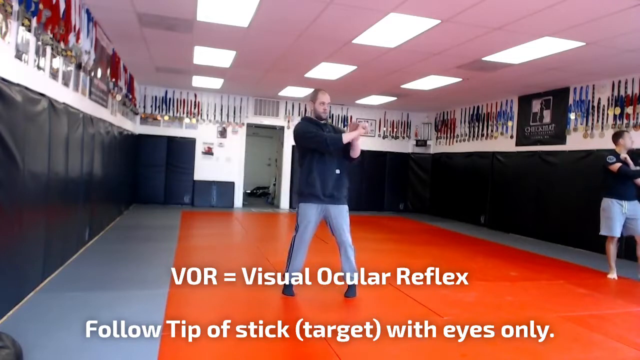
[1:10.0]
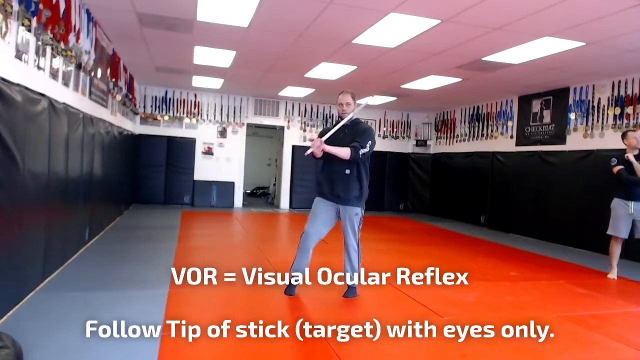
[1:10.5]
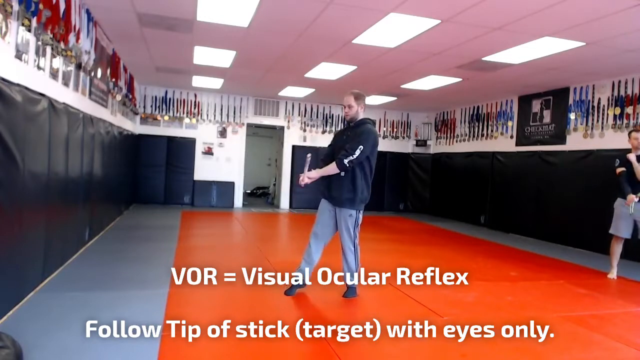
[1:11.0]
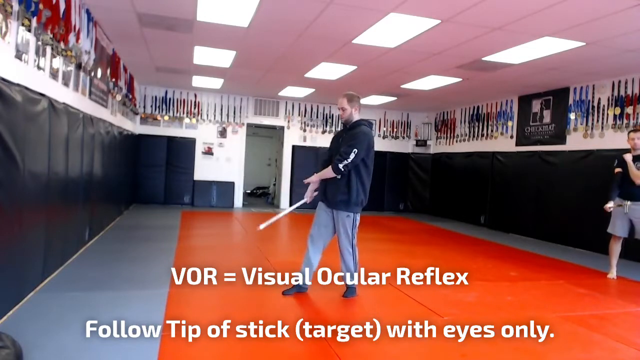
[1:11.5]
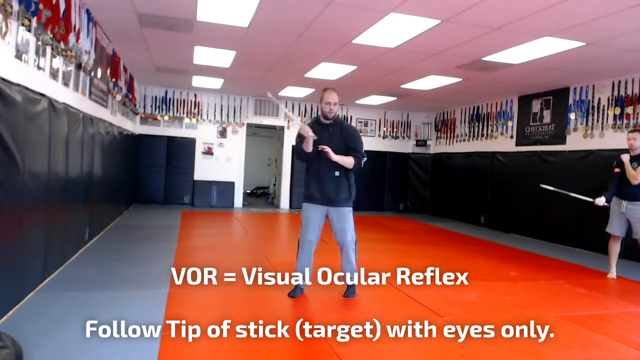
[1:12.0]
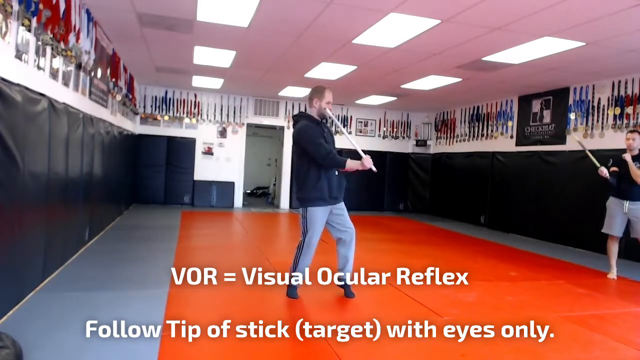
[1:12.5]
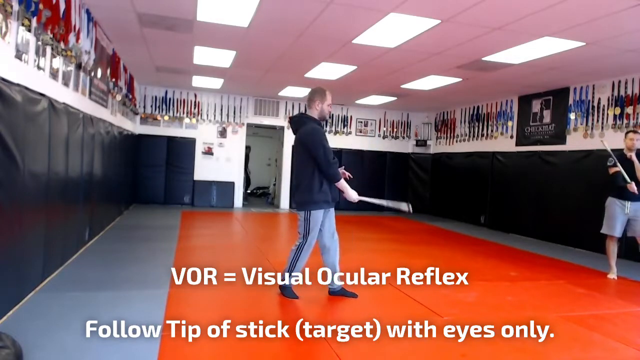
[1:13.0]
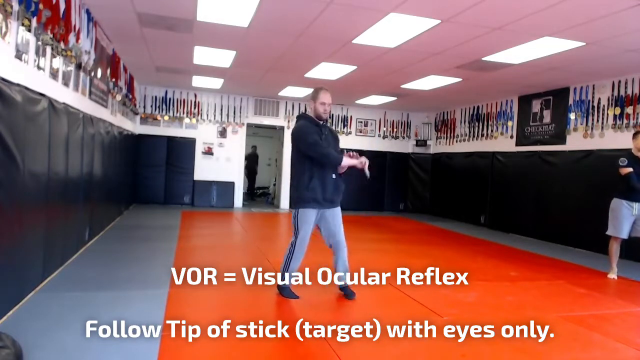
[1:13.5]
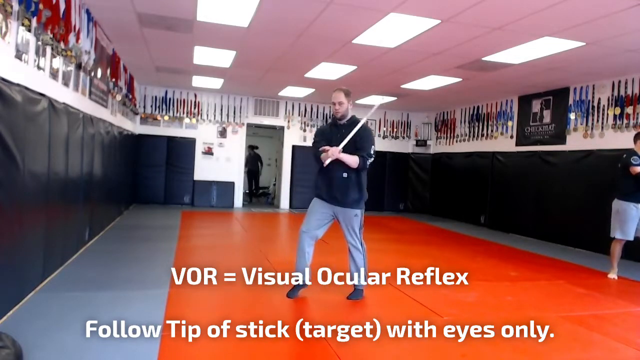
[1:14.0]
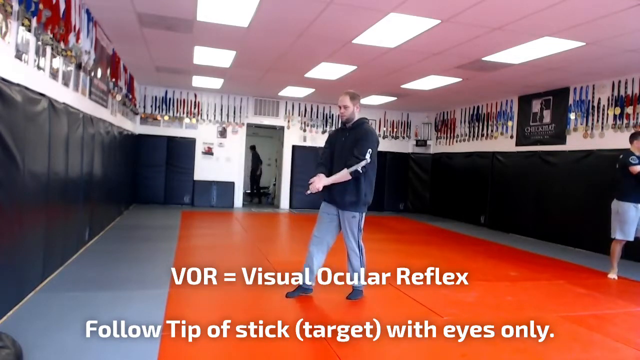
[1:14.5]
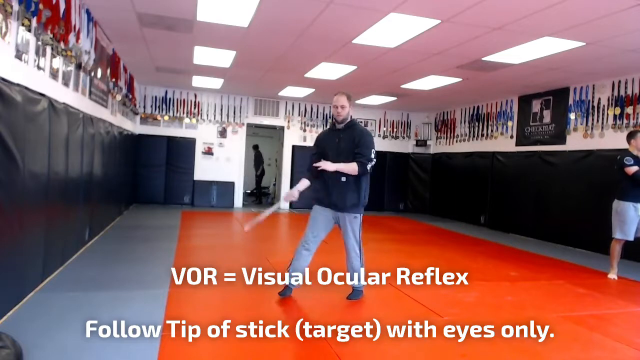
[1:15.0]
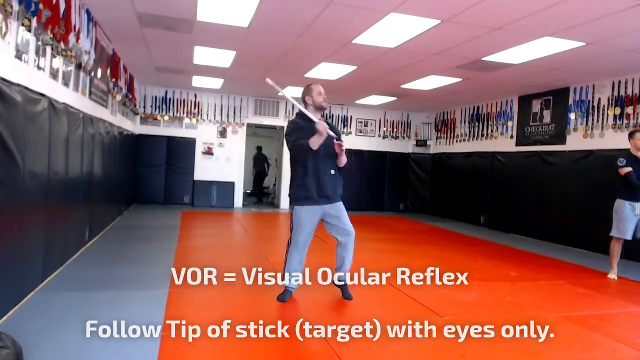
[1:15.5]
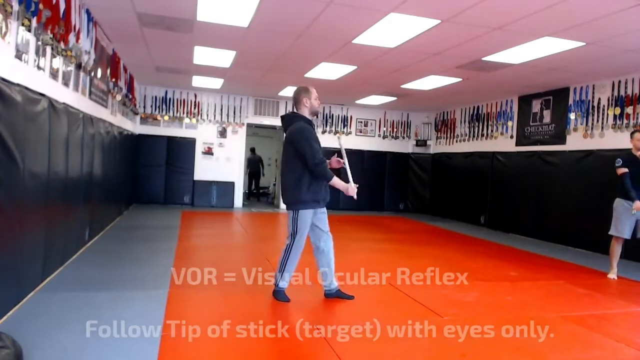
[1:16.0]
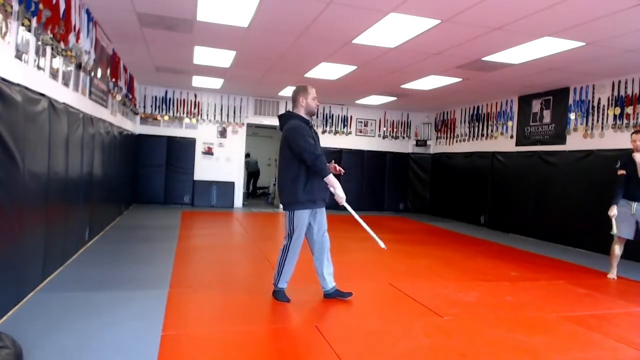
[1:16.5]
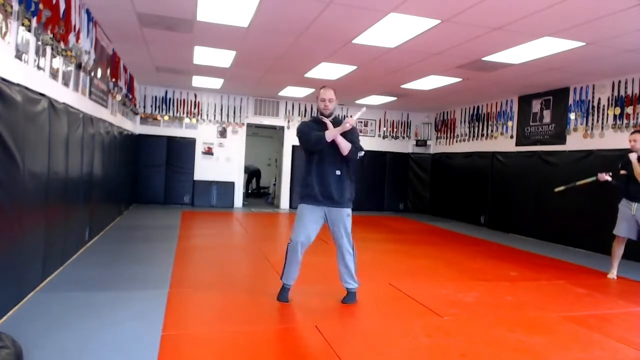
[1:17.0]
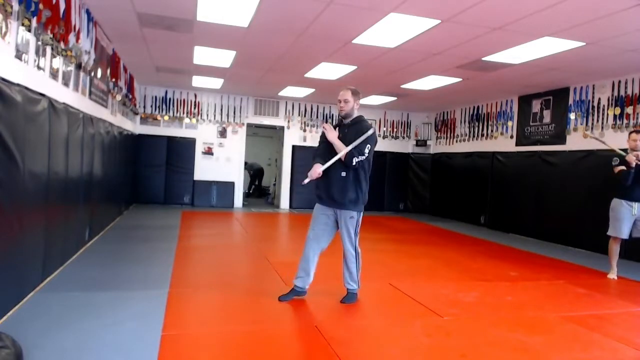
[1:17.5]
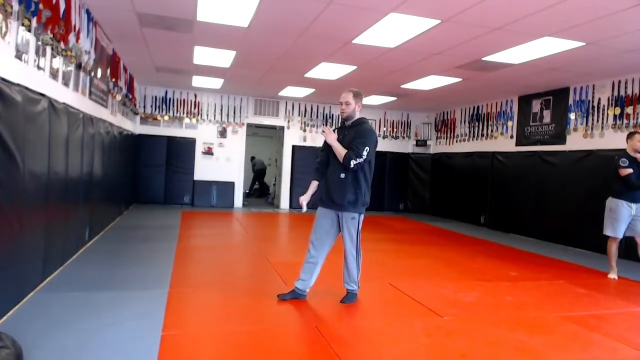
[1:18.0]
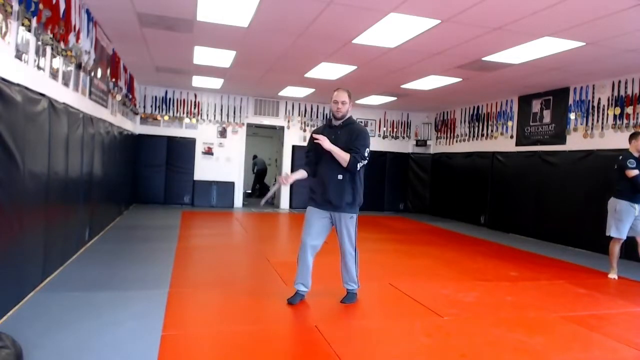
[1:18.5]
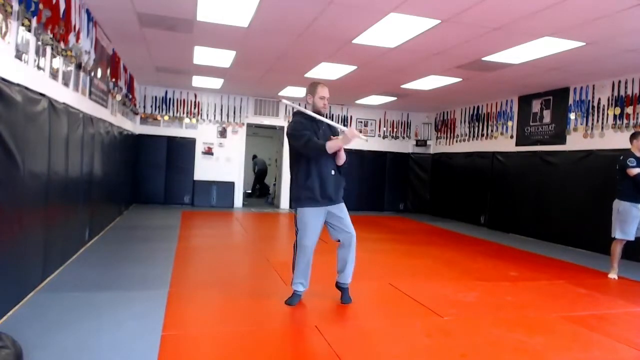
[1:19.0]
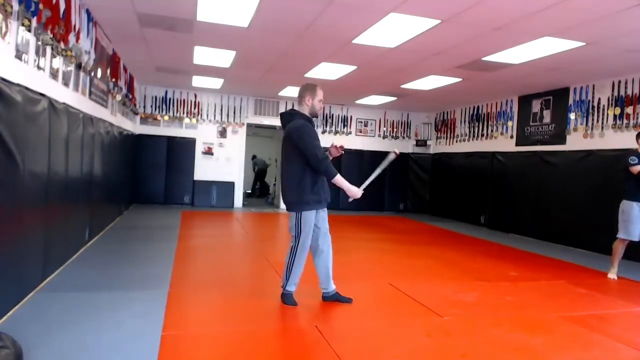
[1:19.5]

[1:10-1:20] The same gym scene continues, set up like an arena with padding on the walls. The two men are still there and the same caption is on screen. They make diagonal motions with the sticks, swinging down and to their right, then up, then down and to the left, then up, repeating this pattern. They don't appear to be looking at the tip of the stick, or maybe they are; their heads are moving from side to side, and it is not clear exactly what is going on. A man, or someone in a hoodie, hard to see, appears in the doorway again.